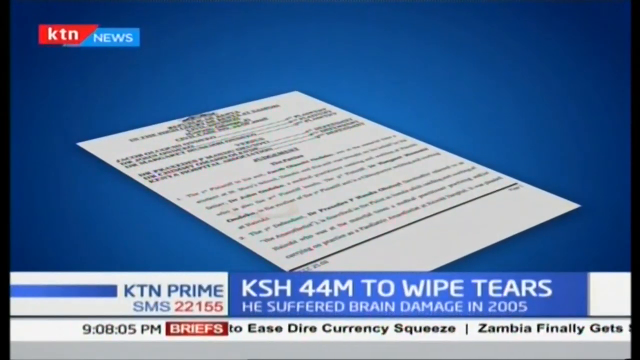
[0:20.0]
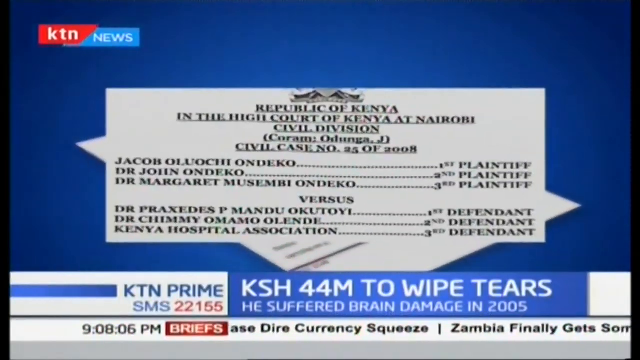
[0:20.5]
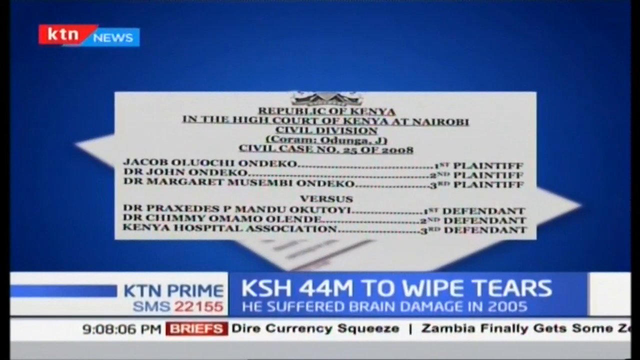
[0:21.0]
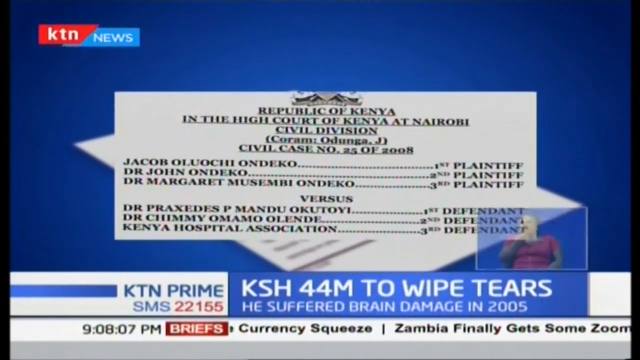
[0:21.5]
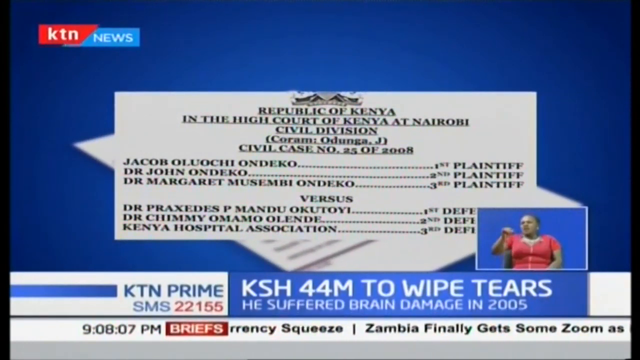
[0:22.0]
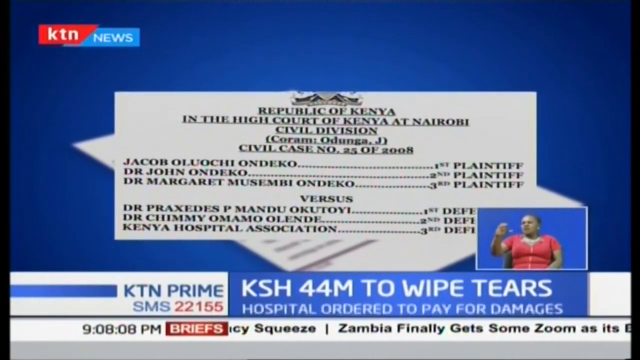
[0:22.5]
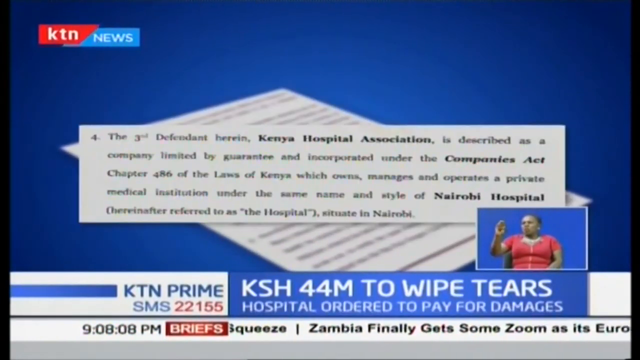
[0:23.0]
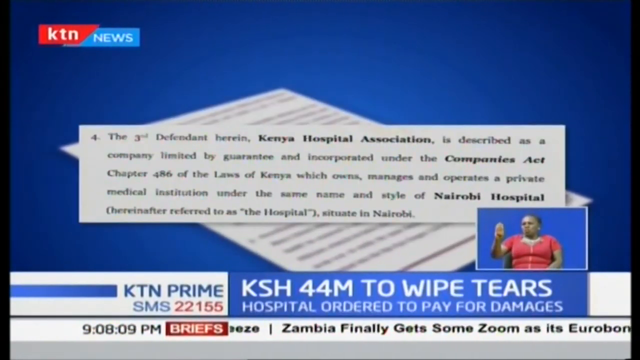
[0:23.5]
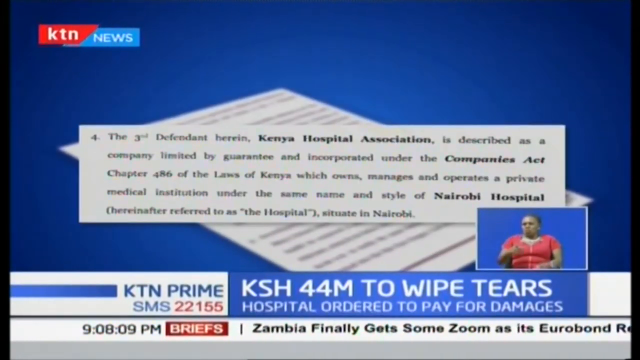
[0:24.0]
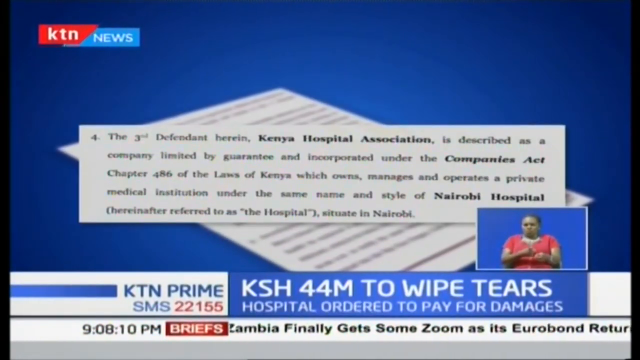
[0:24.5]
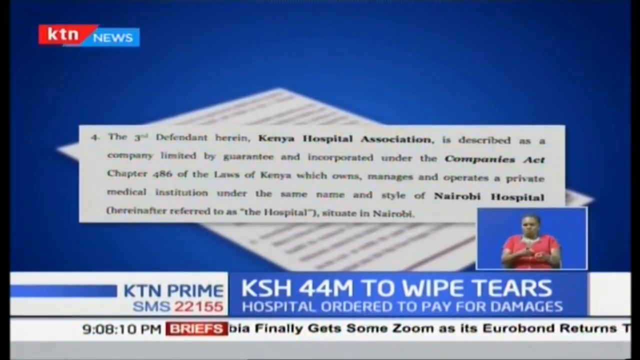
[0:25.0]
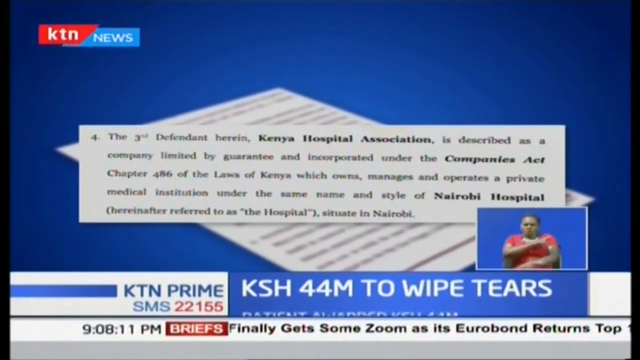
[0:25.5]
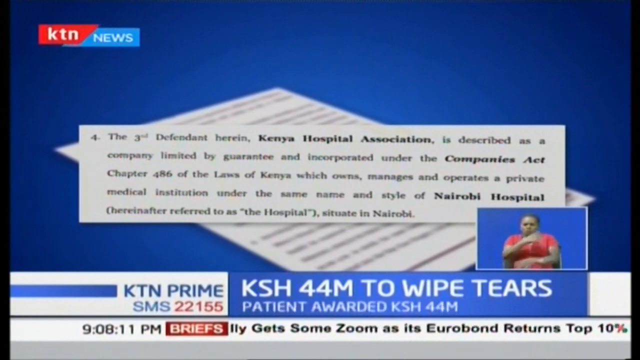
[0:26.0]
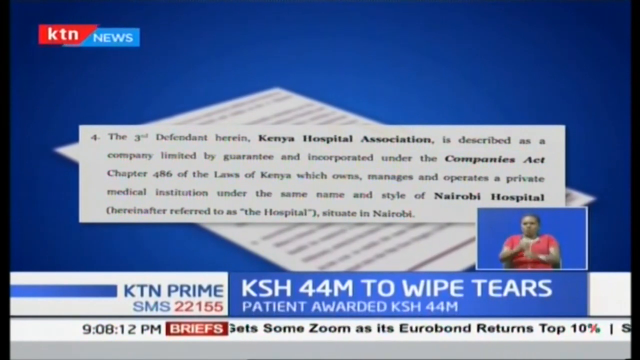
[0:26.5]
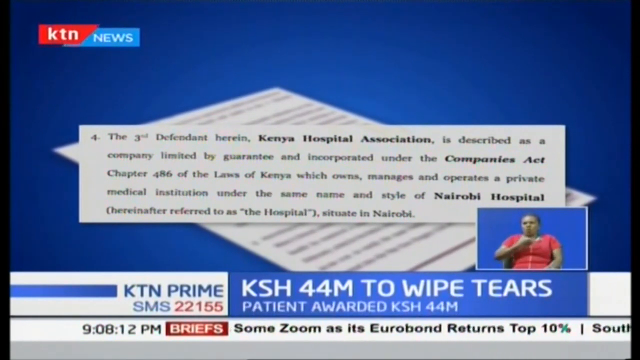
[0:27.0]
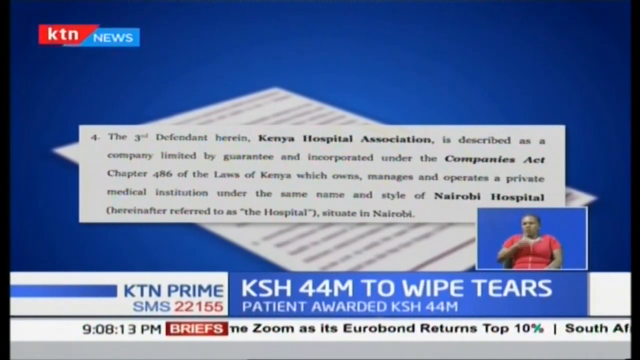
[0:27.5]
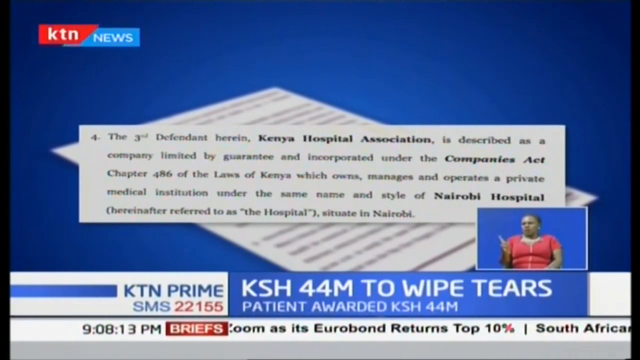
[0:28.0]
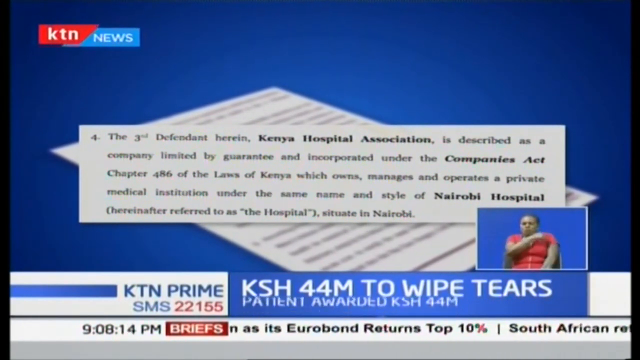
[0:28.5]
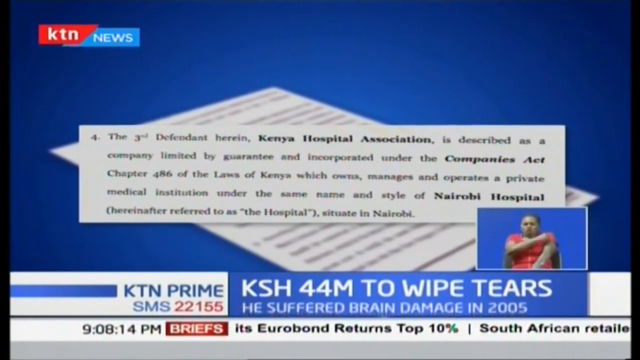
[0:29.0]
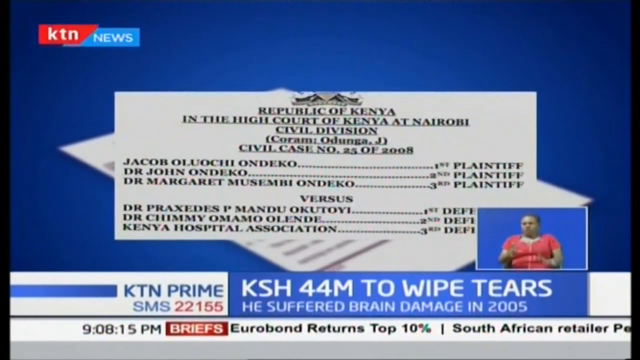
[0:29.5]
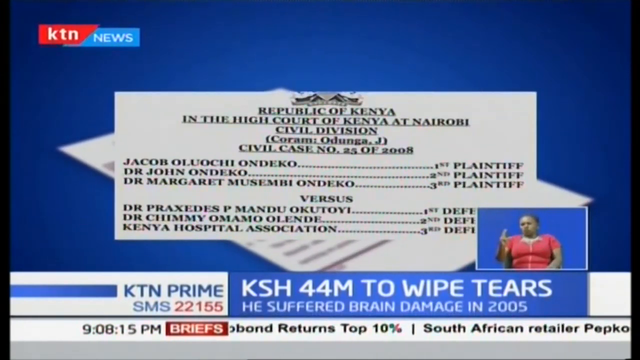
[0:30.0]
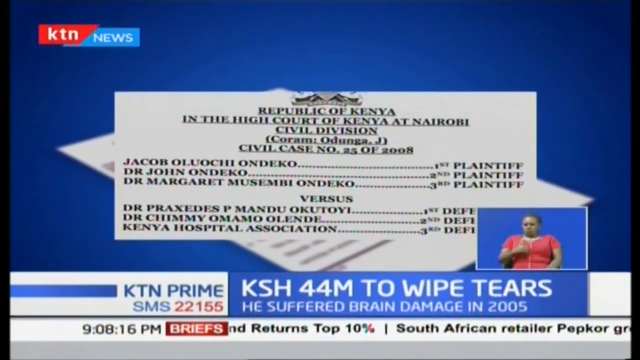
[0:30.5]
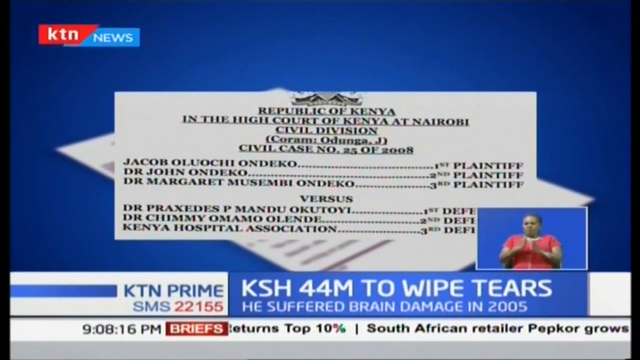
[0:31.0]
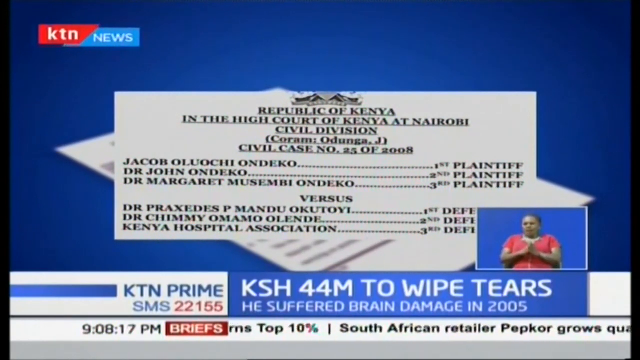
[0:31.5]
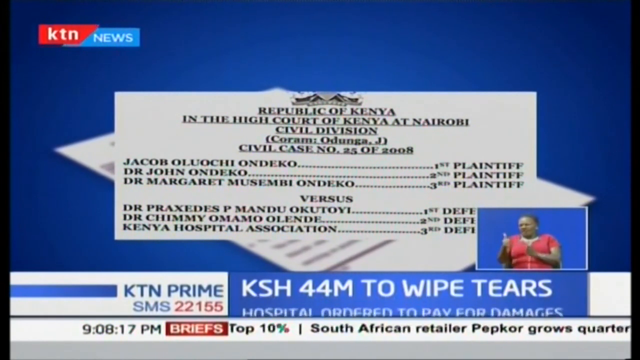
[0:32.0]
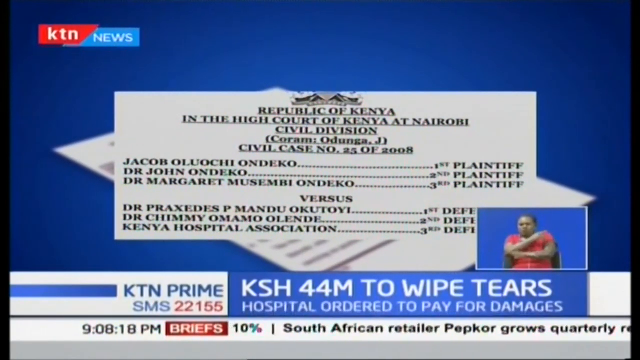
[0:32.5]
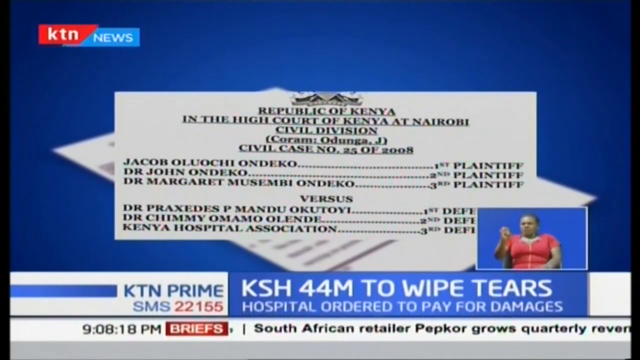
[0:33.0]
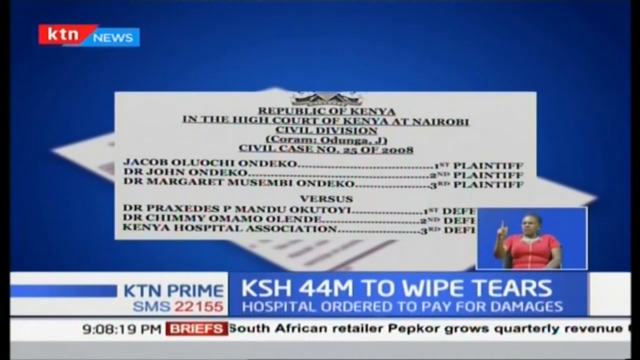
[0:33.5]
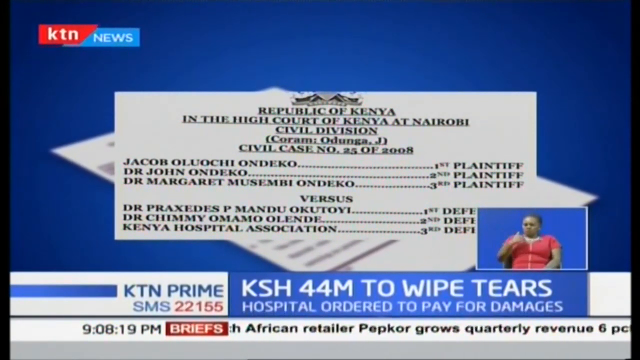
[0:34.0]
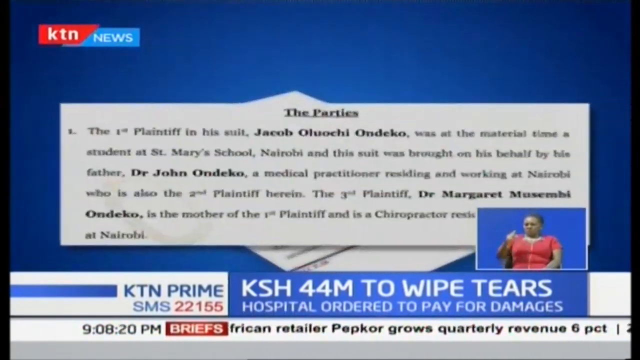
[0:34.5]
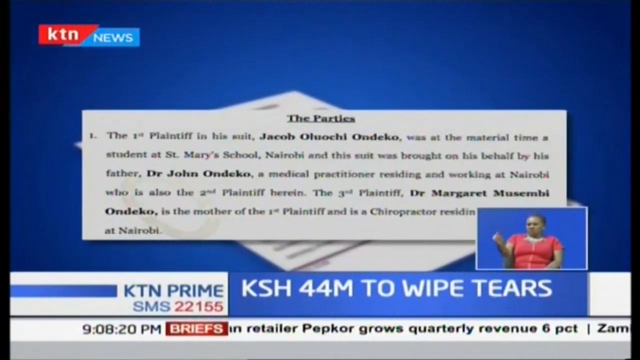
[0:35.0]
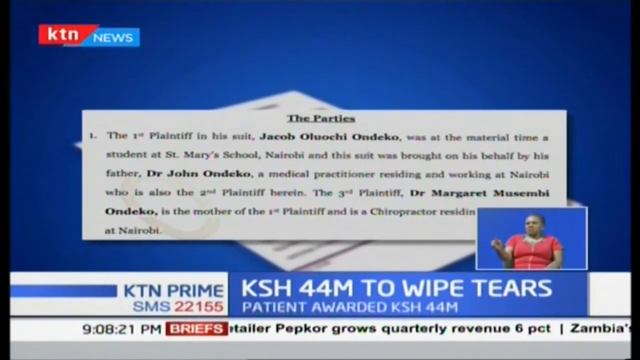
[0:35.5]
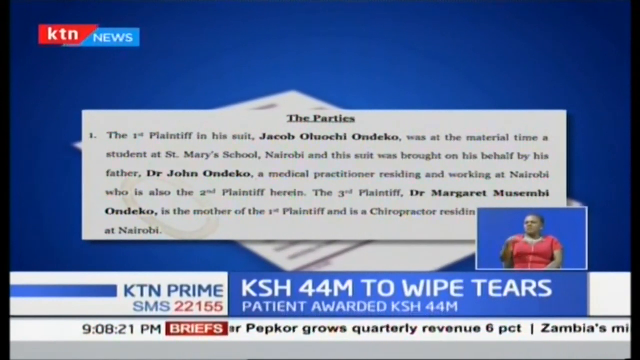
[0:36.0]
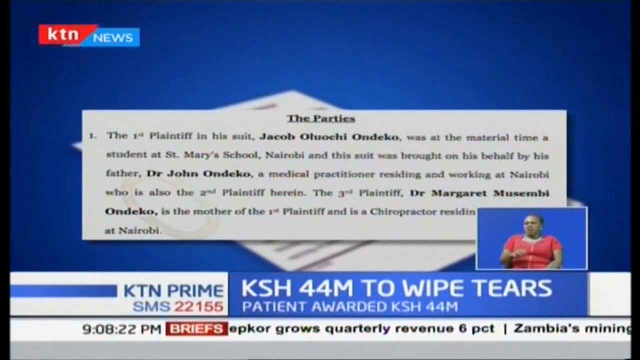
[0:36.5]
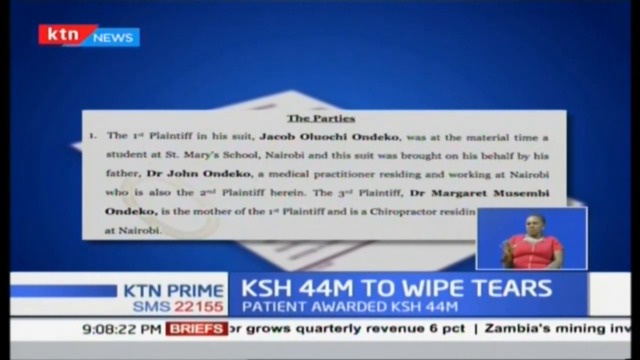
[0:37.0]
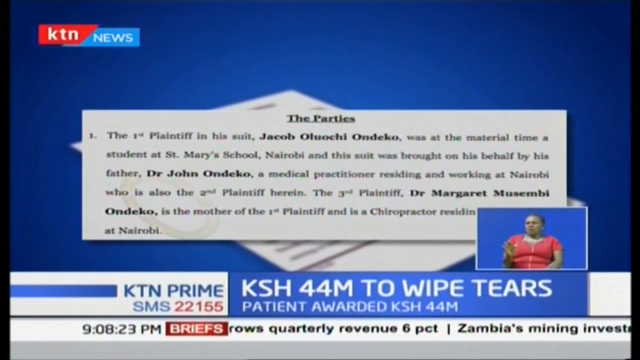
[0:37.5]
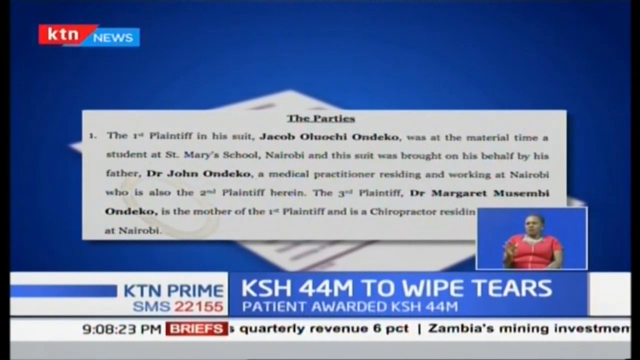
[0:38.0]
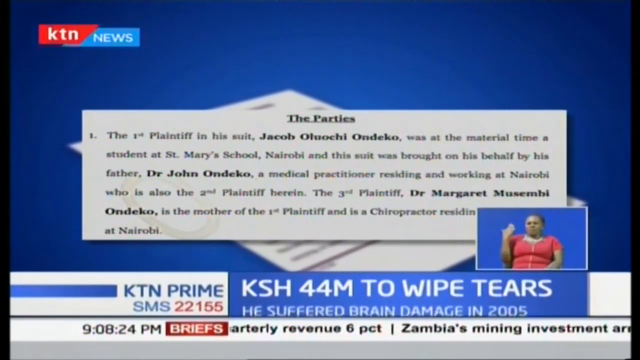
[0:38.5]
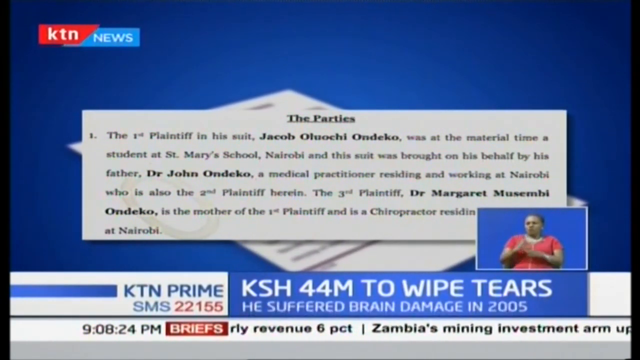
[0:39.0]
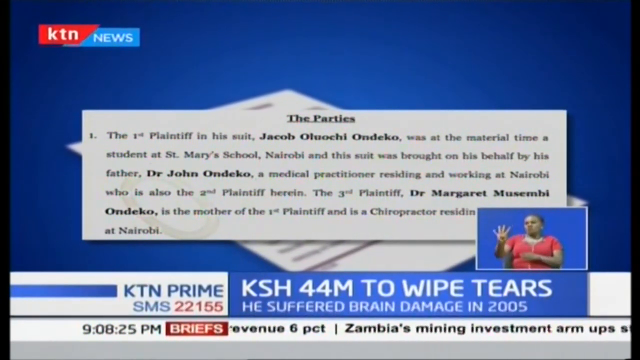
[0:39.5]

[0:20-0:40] A document is shown, and at times a woman in the corner performs sign language. The document reads "Republic of Kenya in the High Court of Kenya at Nairobi" and lists three plaintiffs versus three defendants. Various clips and articles follow, apparently from inside that same court case. At the bottom, underneath "KSH-44M to wipe tears", text reads "the hospital is ordered to pay for the damages". The Kenya Hospital Association is listed as a defendant in one of the documents. The video returns to the Republic of Kenya document and then shows the parties, stating that the first plaintiff is Jacob Oluochi Ondeko, who was a student at the time at St. Mary's school.